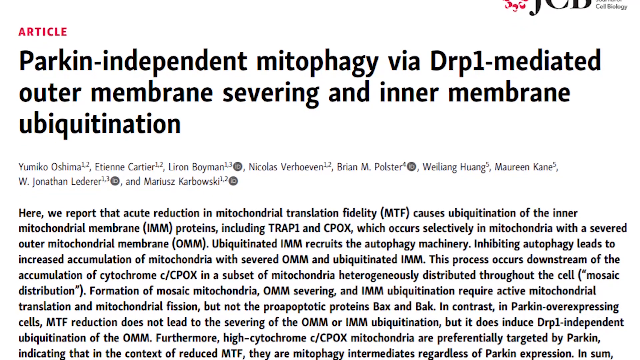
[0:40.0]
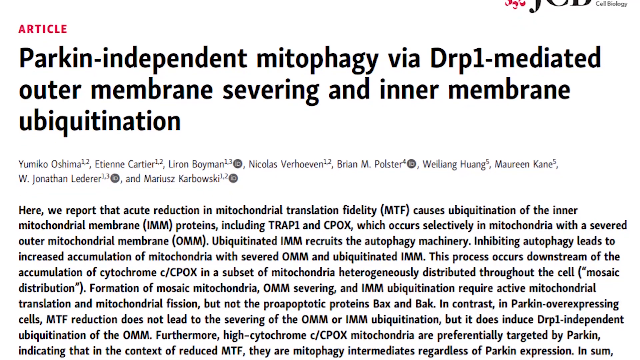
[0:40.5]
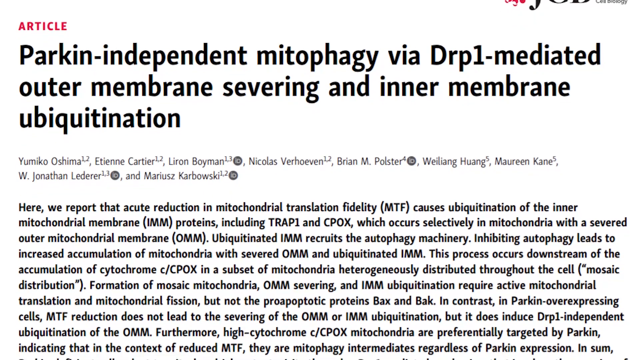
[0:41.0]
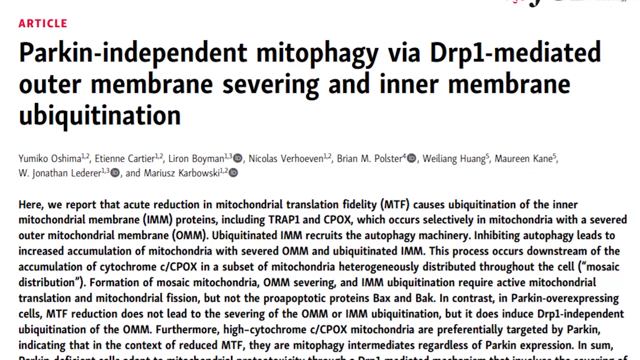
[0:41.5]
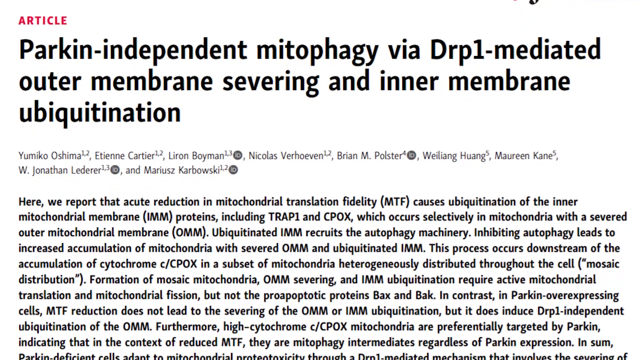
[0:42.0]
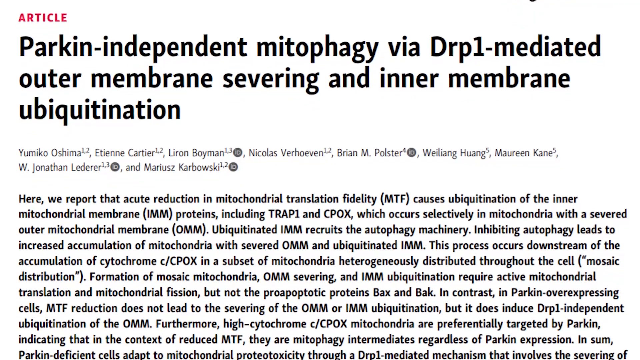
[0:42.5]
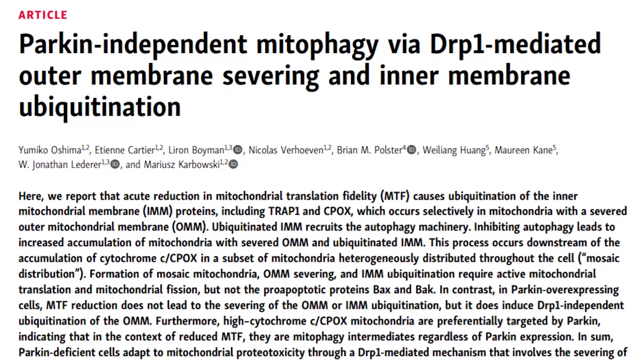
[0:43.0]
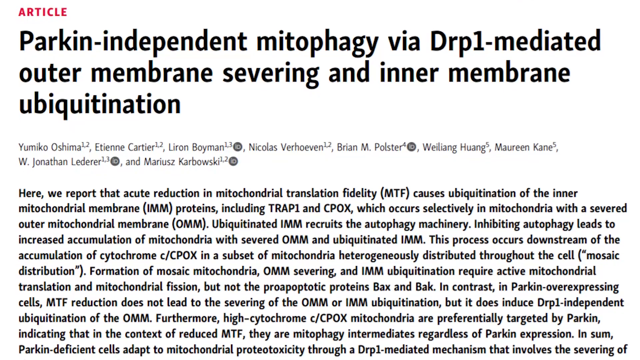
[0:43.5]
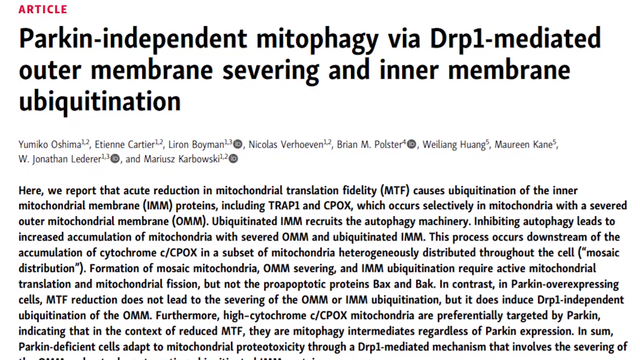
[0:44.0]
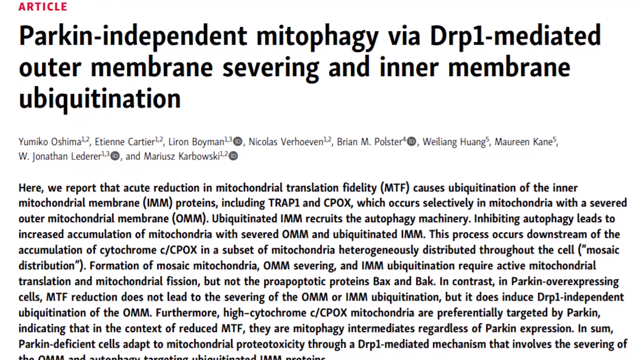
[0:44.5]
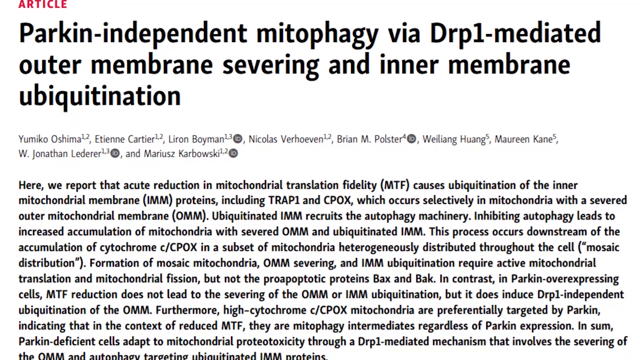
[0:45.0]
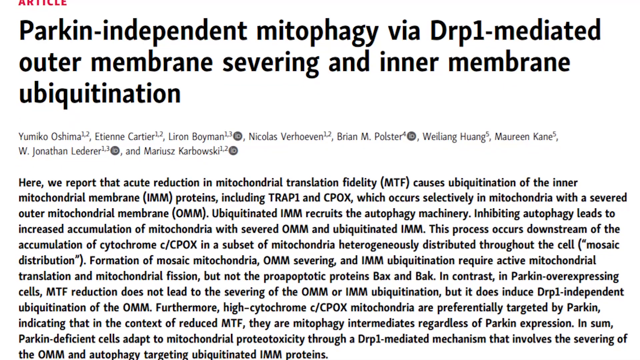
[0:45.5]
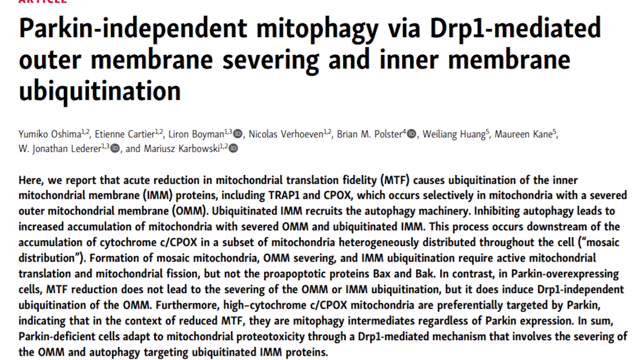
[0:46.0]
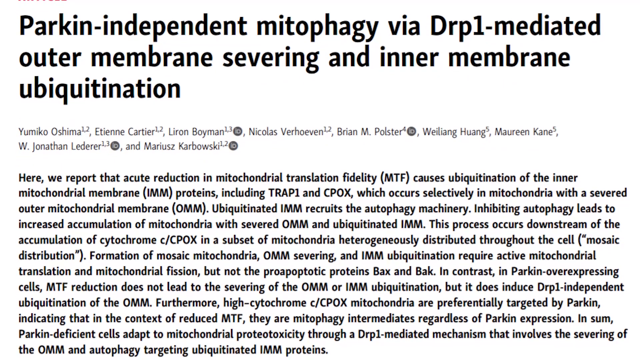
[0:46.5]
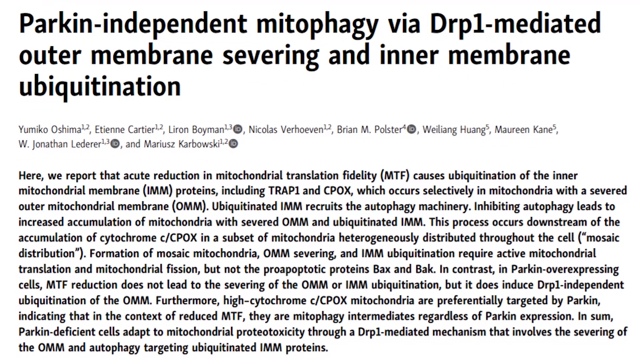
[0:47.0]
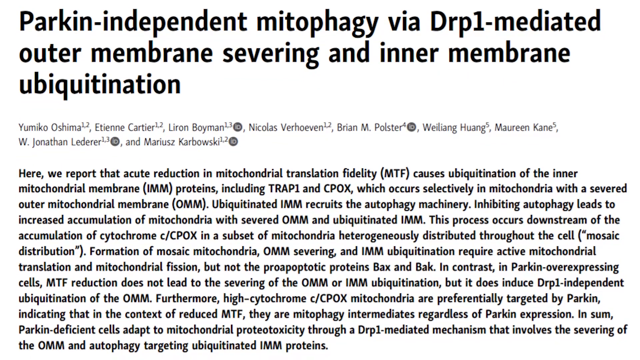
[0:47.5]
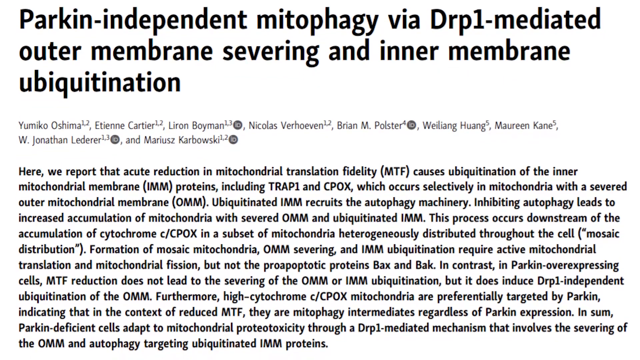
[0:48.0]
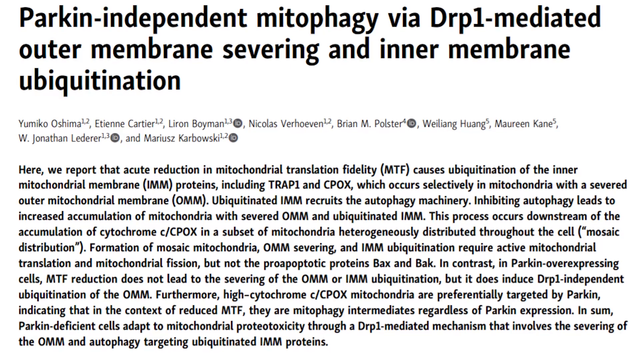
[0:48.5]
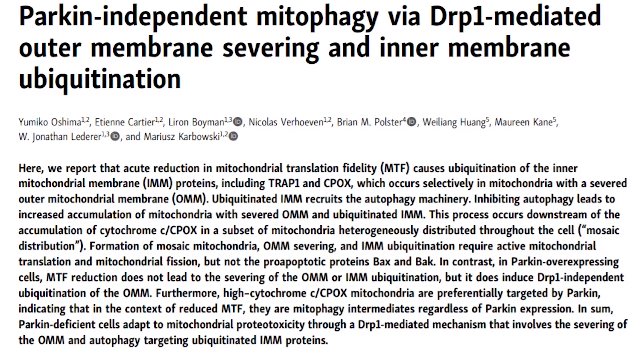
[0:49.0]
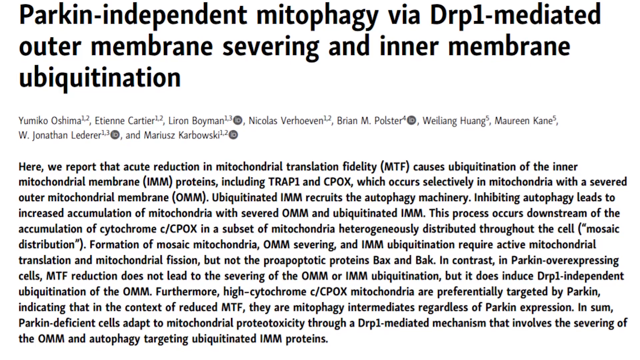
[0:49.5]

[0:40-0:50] The article is slowly scrolled through. Its introductory paragraph, which is similar to the title, describes a report on the acute reduction of mitochondrial translation fidelity caused by ubiquitination of inner mitochondrial membrane proteins, occurring selectively in mitochondria with a severed outer membrane. It looks like the presenter is one of nine contributors listed on the article.